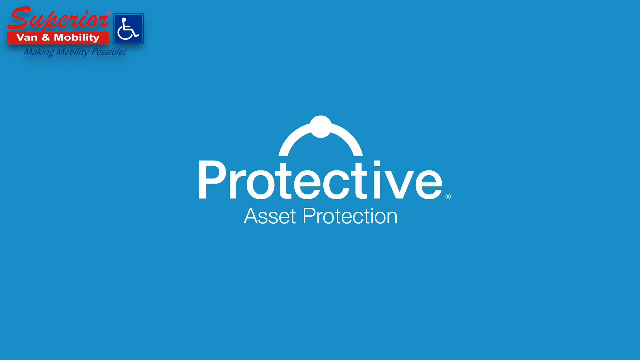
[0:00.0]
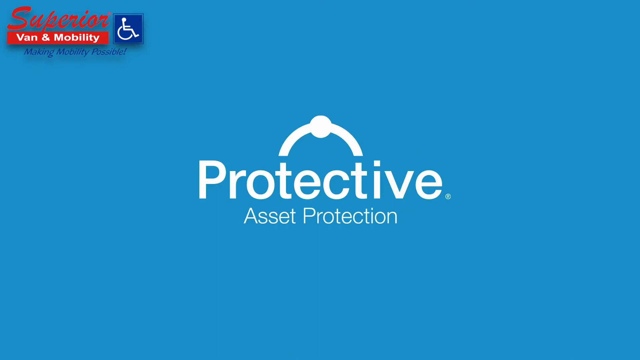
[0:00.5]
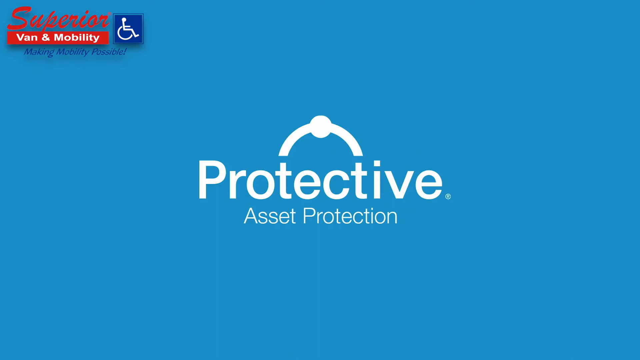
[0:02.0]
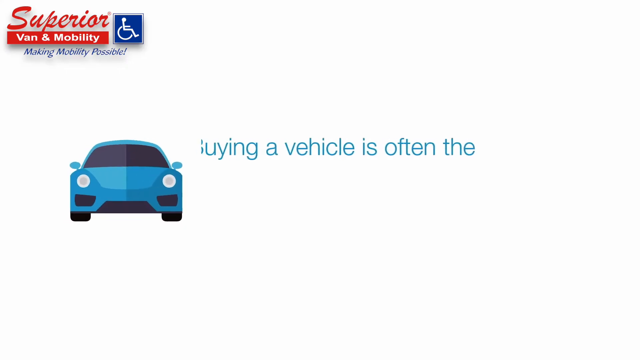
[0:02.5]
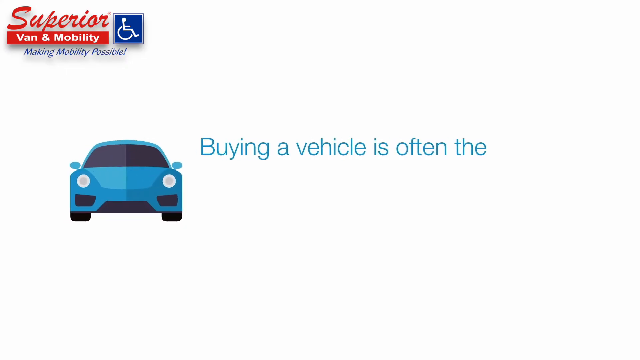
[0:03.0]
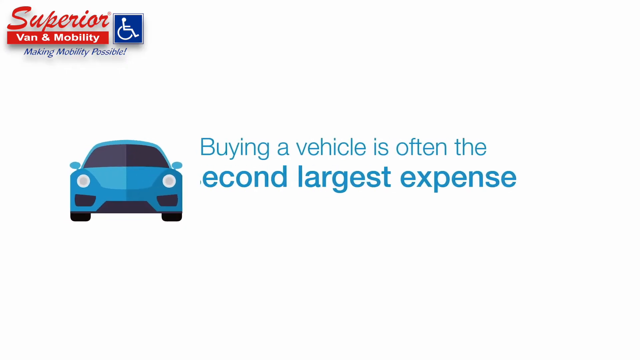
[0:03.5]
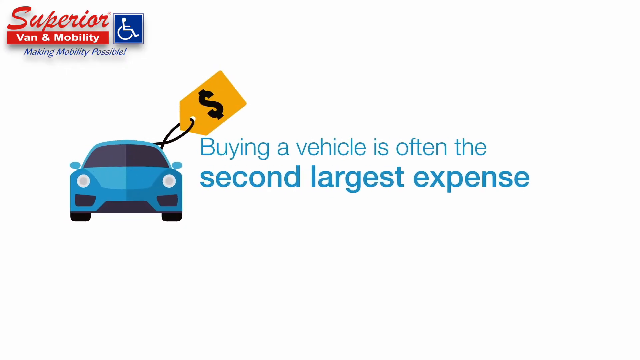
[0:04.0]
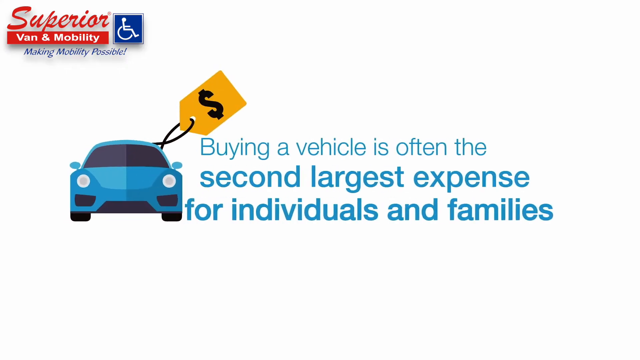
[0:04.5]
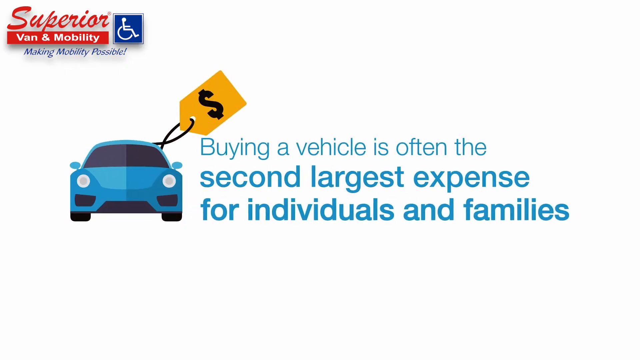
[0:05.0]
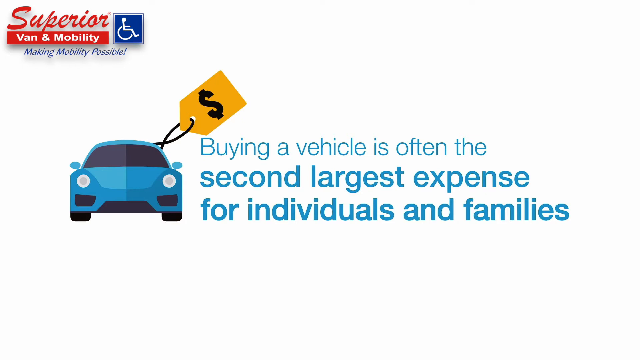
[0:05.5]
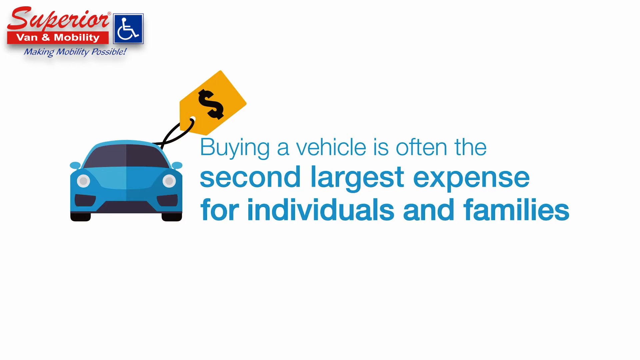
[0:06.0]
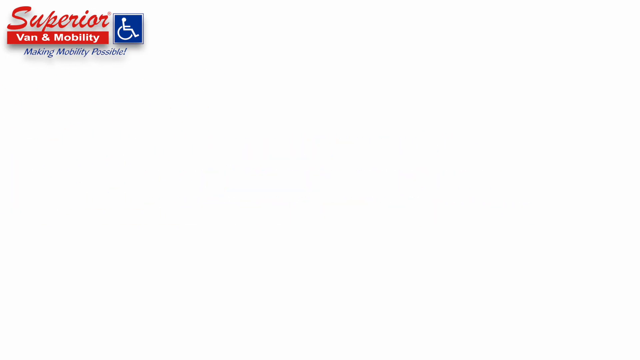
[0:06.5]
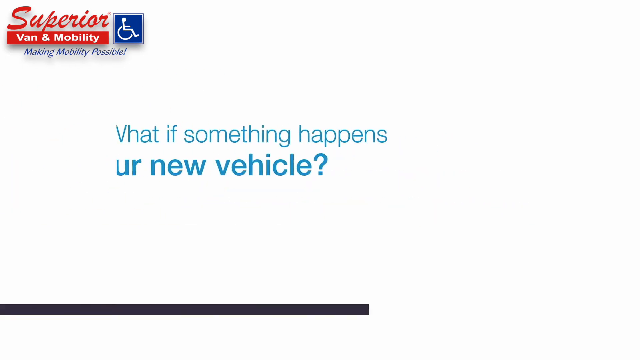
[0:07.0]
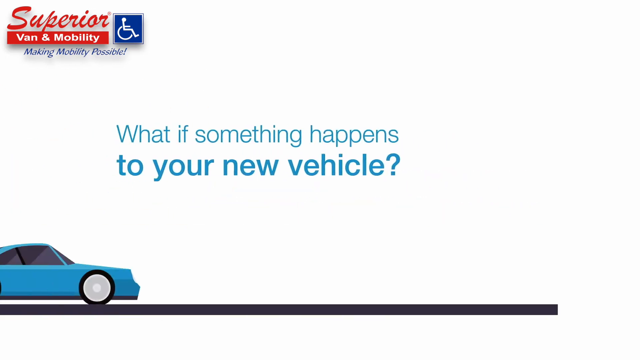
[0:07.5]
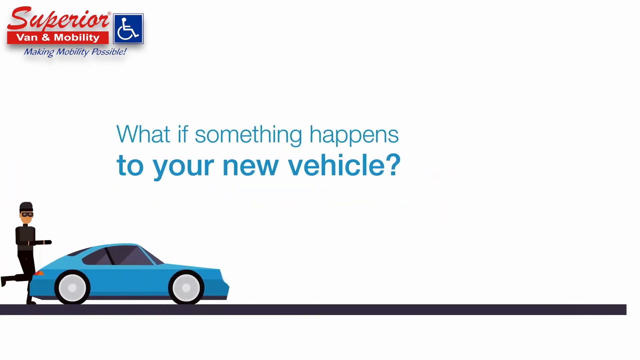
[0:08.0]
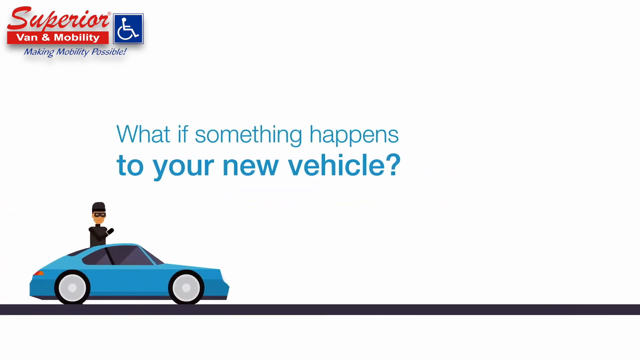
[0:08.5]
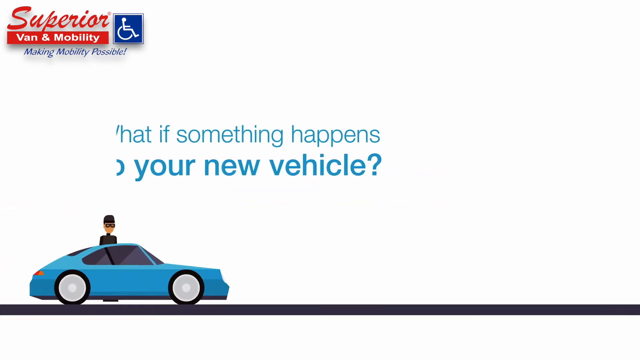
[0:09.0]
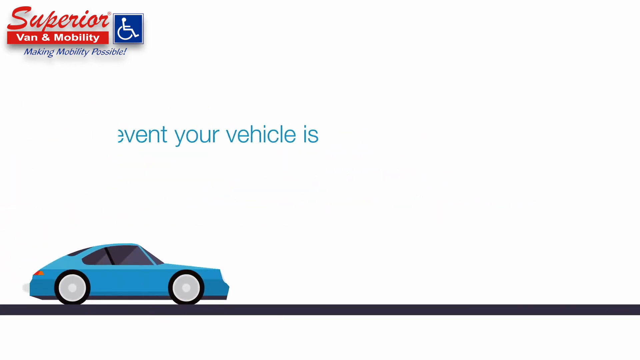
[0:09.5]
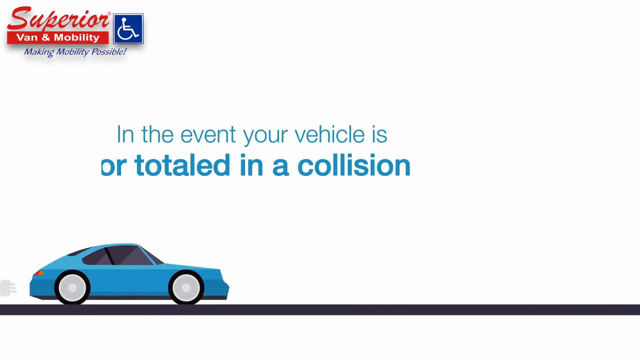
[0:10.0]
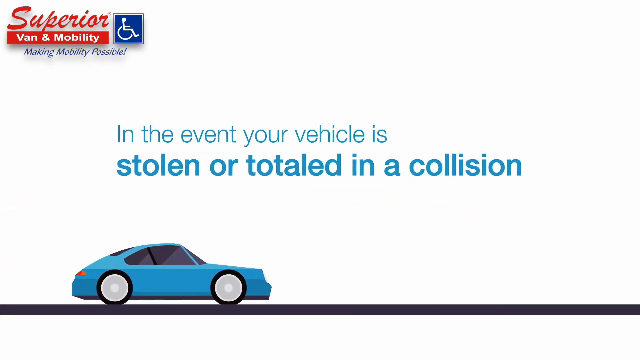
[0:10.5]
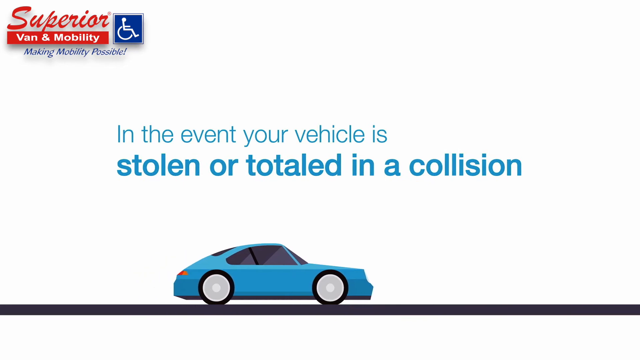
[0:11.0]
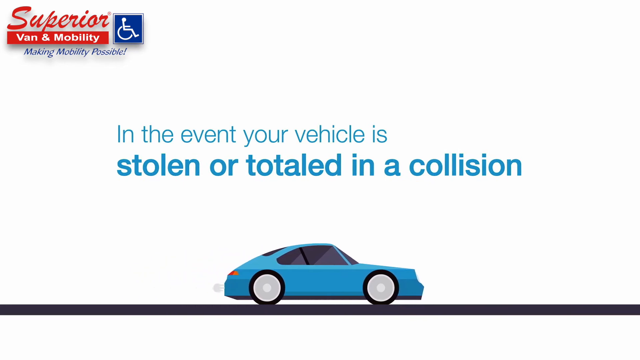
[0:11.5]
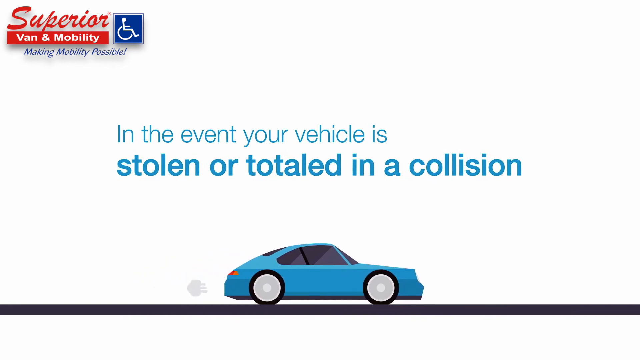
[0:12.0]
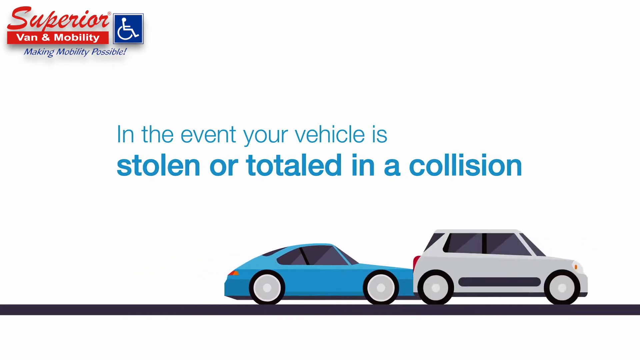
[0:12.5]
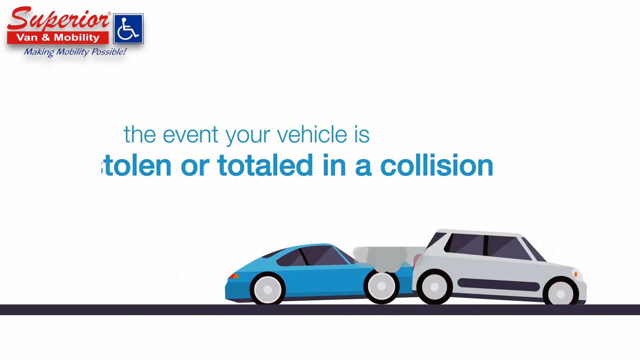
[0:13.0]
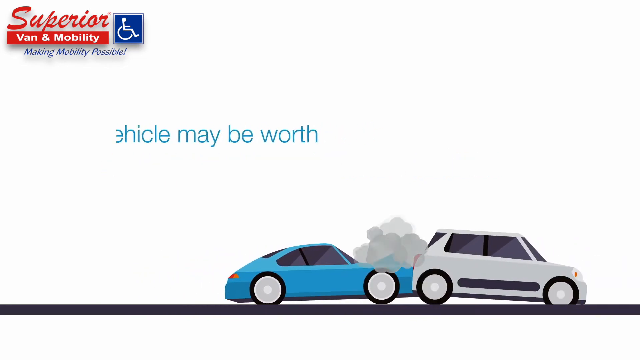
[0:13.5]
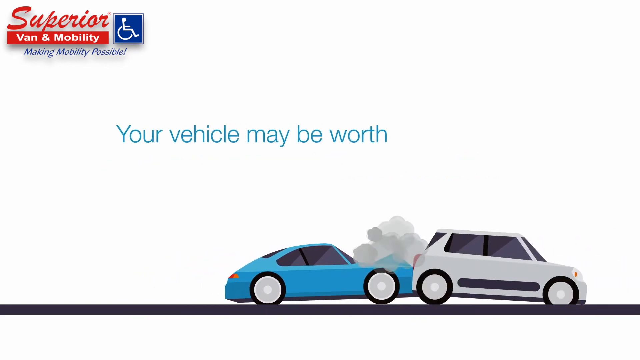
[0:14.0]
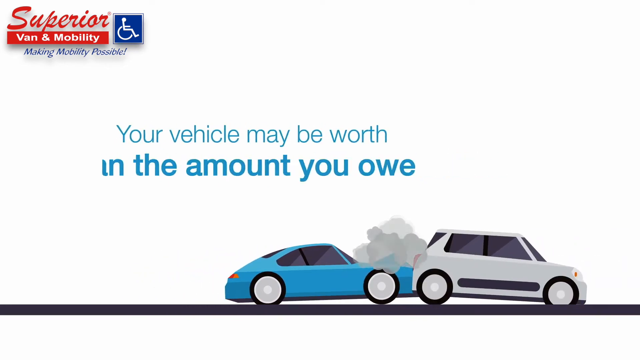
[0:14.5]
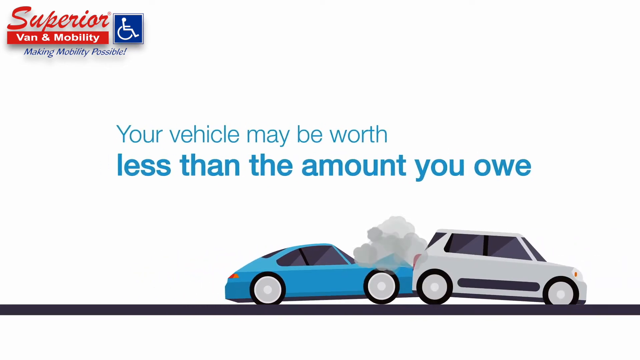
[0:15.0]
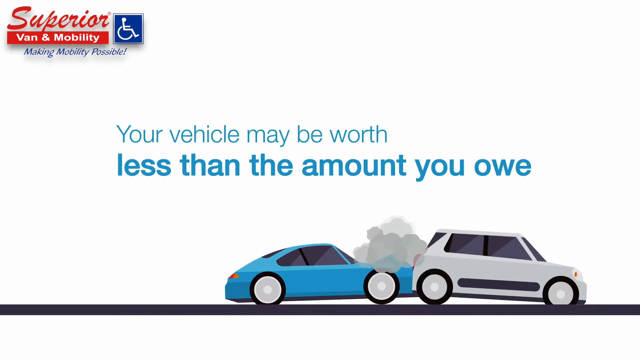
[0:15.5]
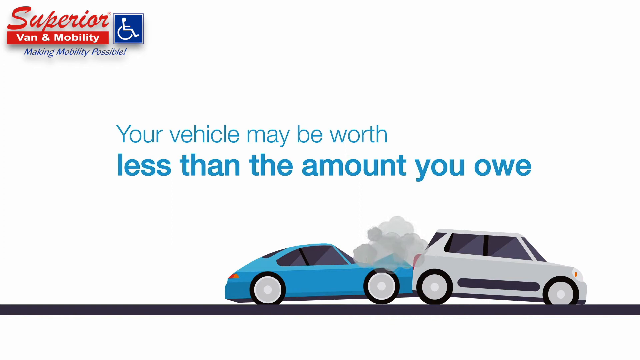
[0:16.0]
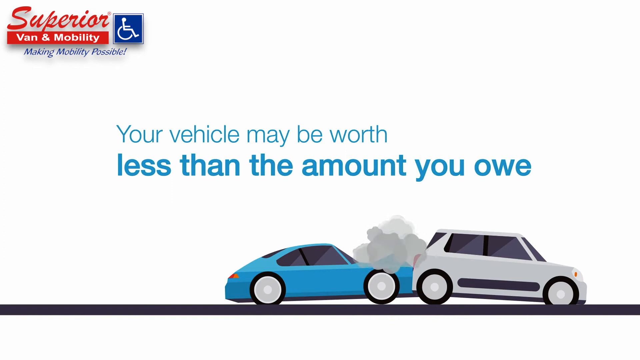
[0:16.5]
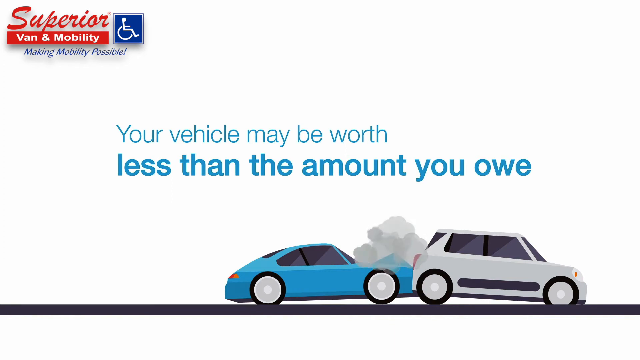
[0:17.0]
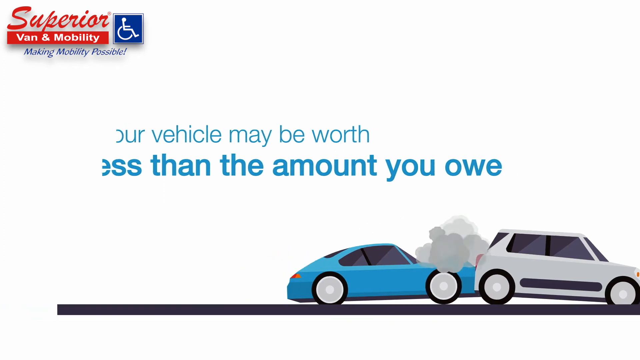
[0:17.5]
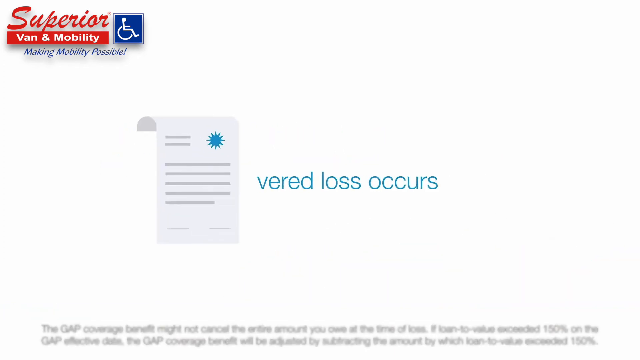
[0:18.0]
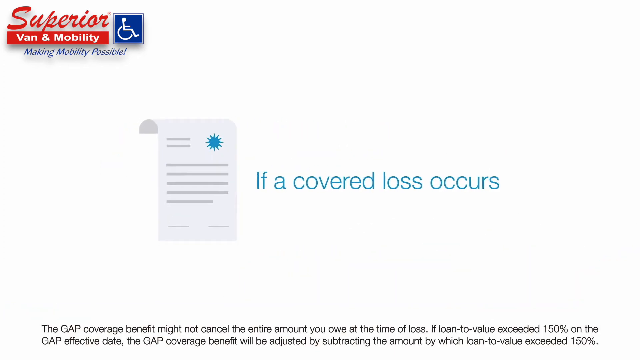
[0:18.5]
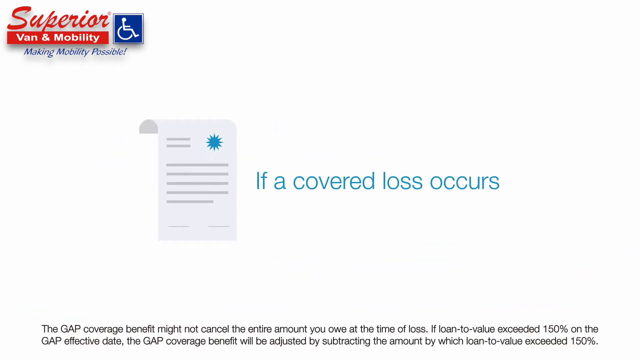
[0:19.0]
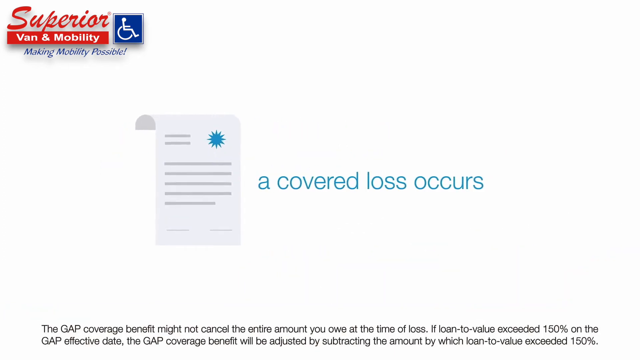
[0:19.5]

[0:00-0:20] Text reads "Van Mobility," with a handicap logo to the right and "Making Mobility Possible" below. At the center is "Protective Asset Protection." A car comes in on the left, which is blue, and text at the center slides in from left to right: "buying a vehicle is often the second largest expense for individuals and families." Next, text comes in from left to right: "what if something happens to your vehicle," and at the bottom a blue car comes in on the right. A man runs in and shrinks into the car to show that he has gotten inside it. Text fades in from left to right: "in the event your vehicle is stolen or totaled in the collision," and the car at the bottom crashes into a gray car, with smoke at the top. Text comes in: "your vehicle may be worth less than the amount you owe." The cars at the bottom fade over to the right, the text at the top swipes to the left, and a document comes in.